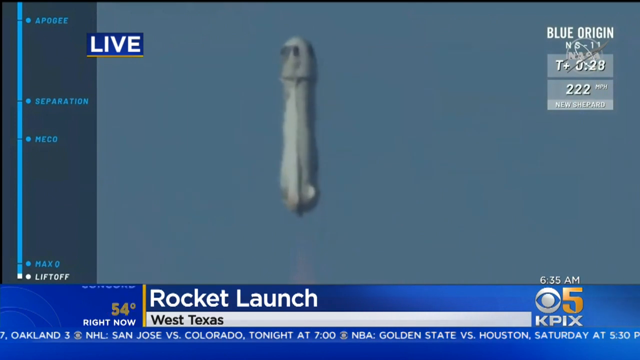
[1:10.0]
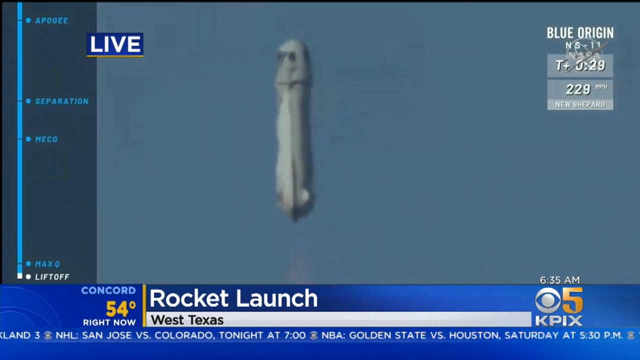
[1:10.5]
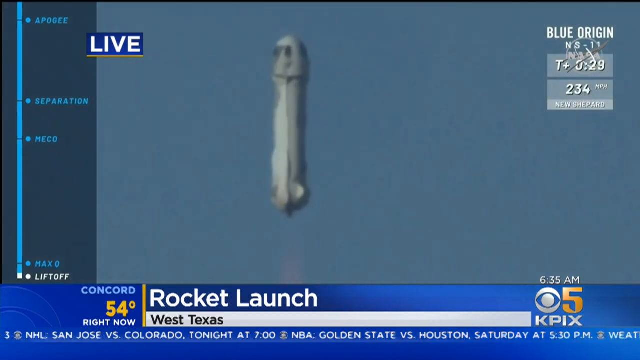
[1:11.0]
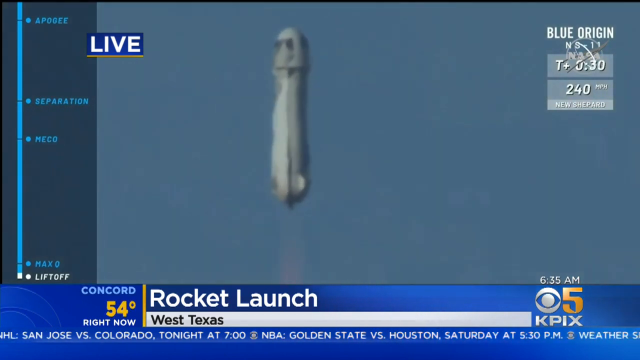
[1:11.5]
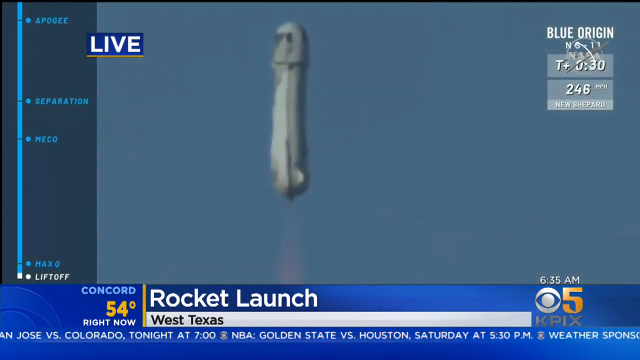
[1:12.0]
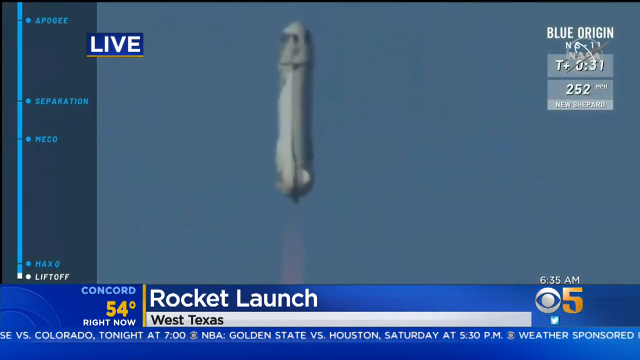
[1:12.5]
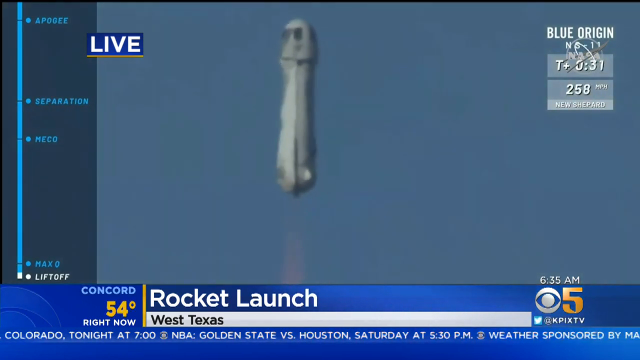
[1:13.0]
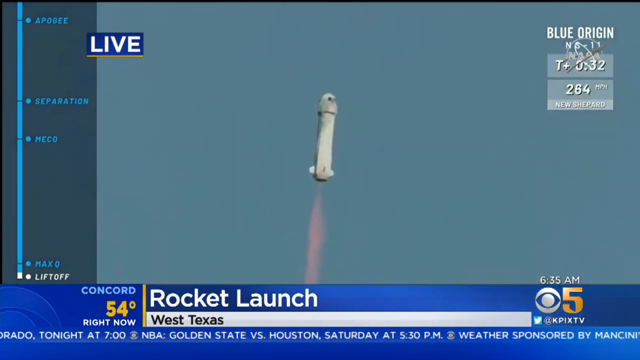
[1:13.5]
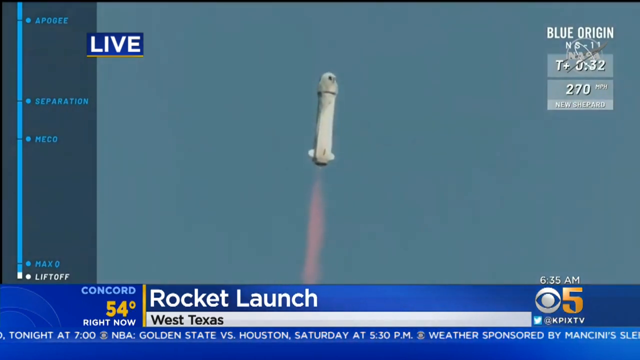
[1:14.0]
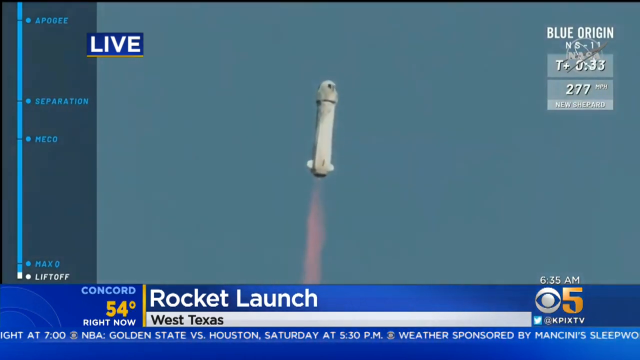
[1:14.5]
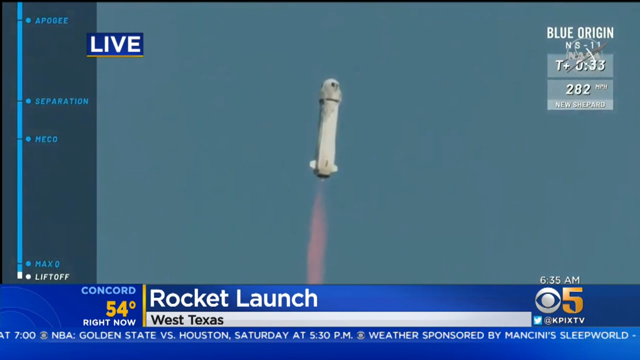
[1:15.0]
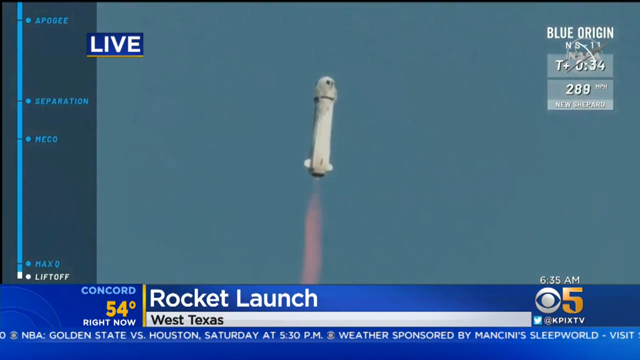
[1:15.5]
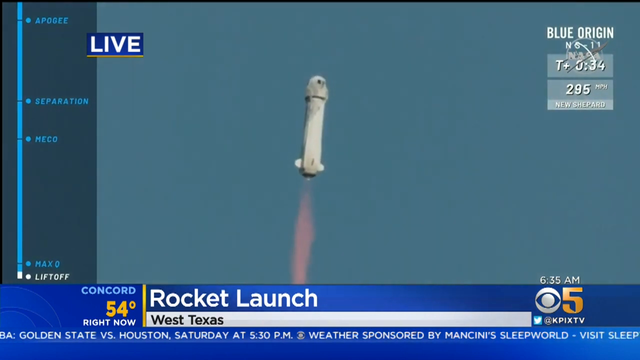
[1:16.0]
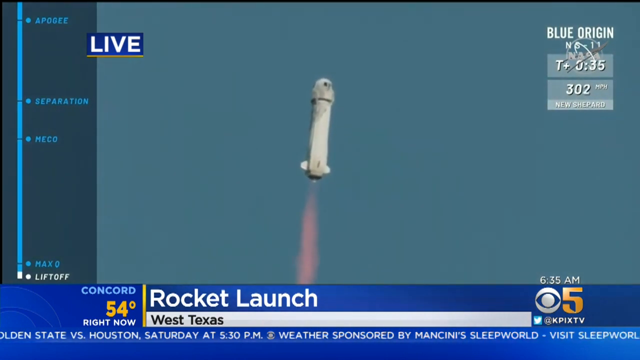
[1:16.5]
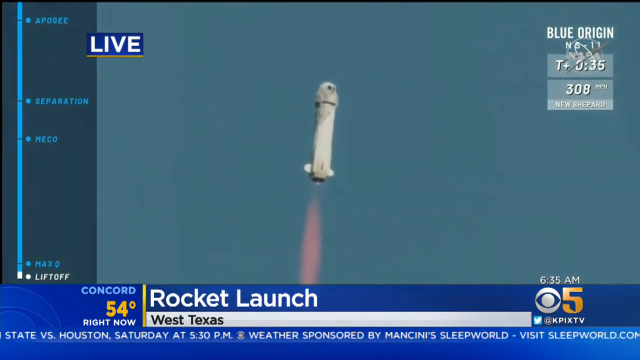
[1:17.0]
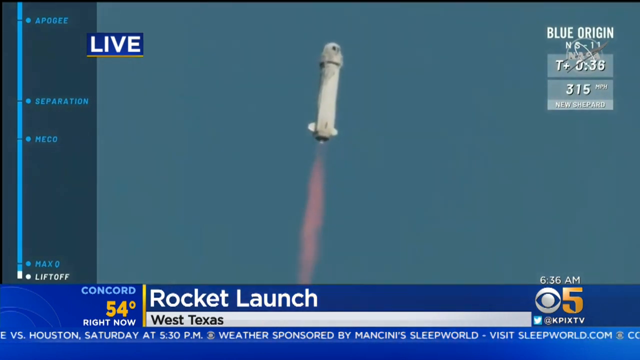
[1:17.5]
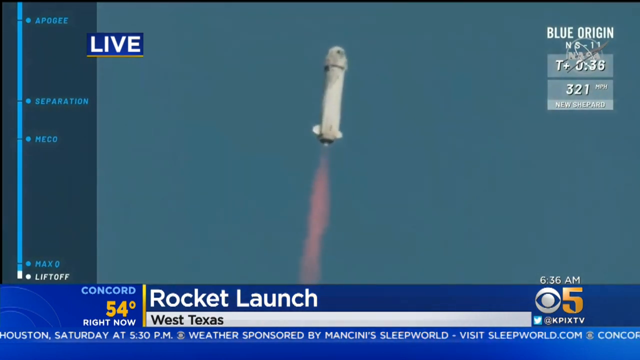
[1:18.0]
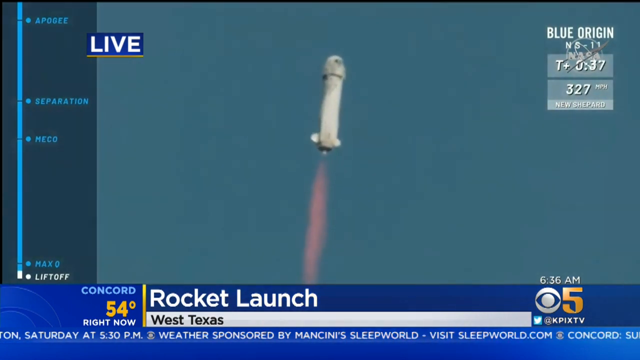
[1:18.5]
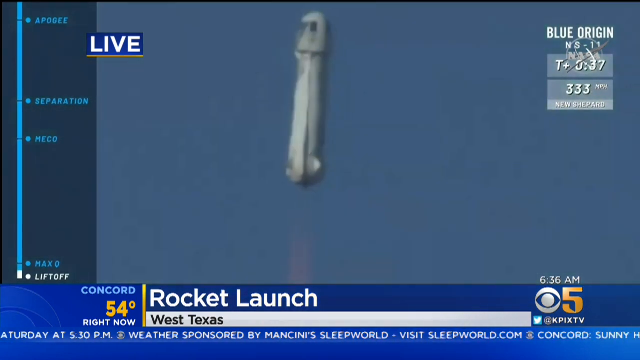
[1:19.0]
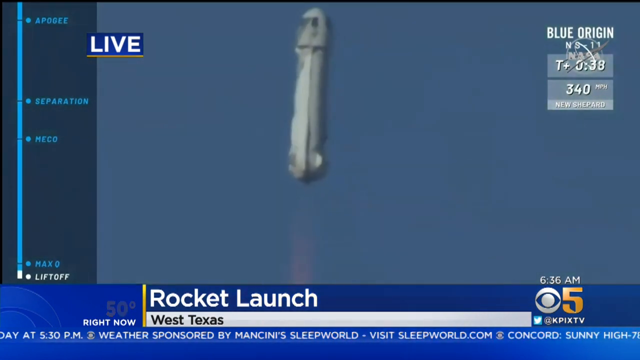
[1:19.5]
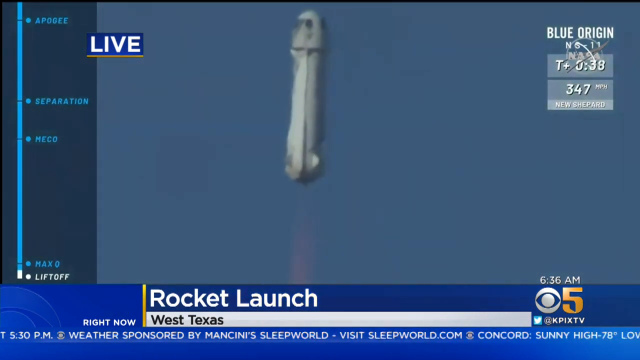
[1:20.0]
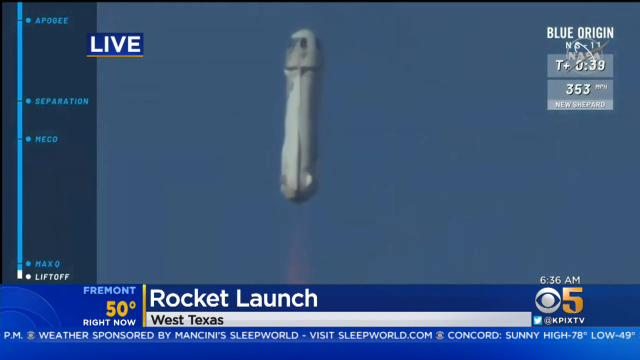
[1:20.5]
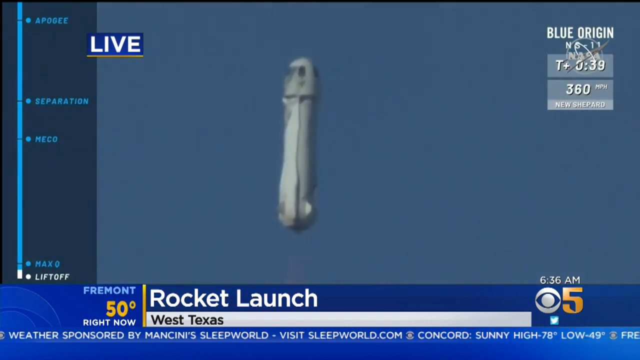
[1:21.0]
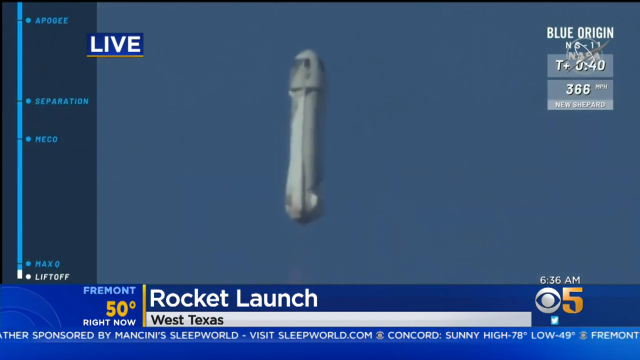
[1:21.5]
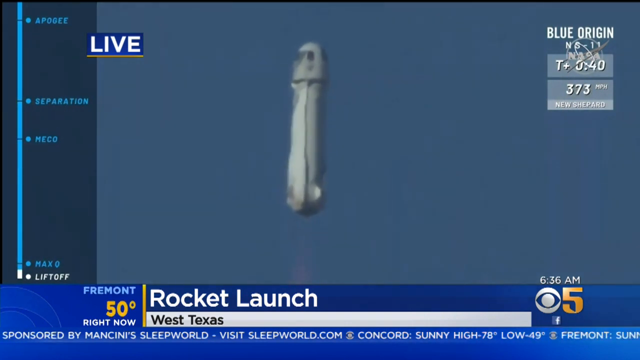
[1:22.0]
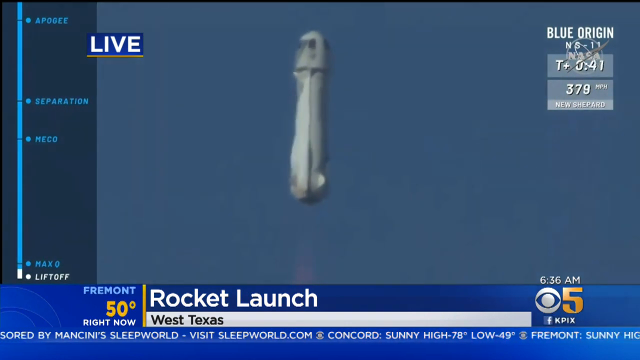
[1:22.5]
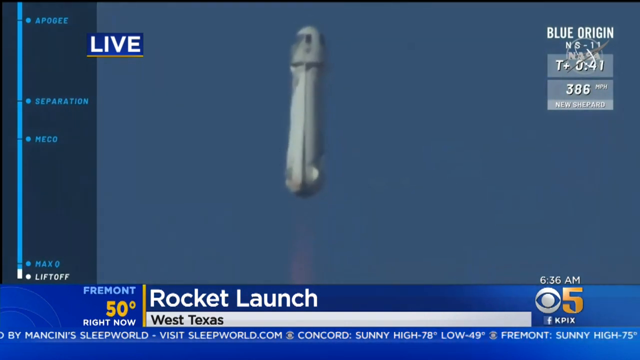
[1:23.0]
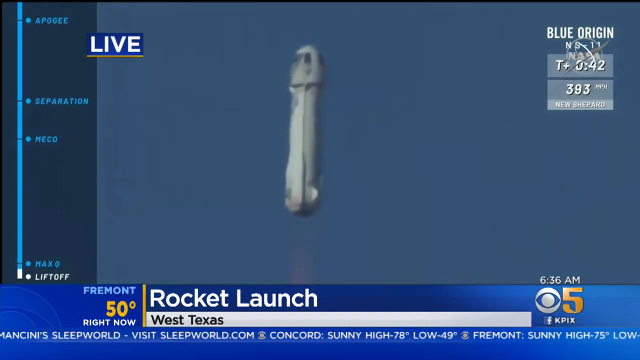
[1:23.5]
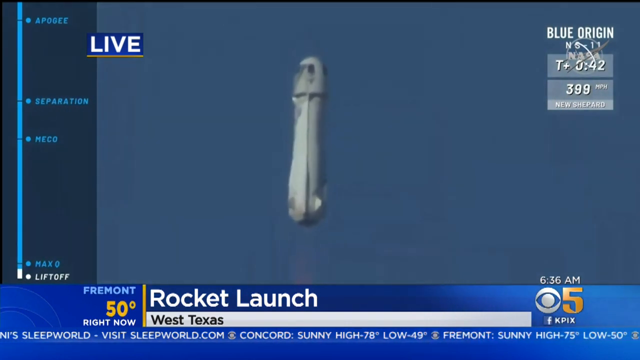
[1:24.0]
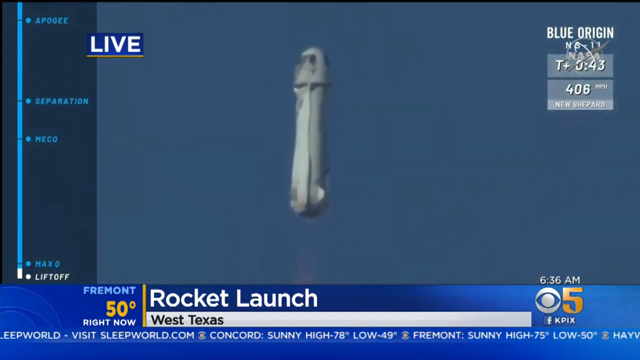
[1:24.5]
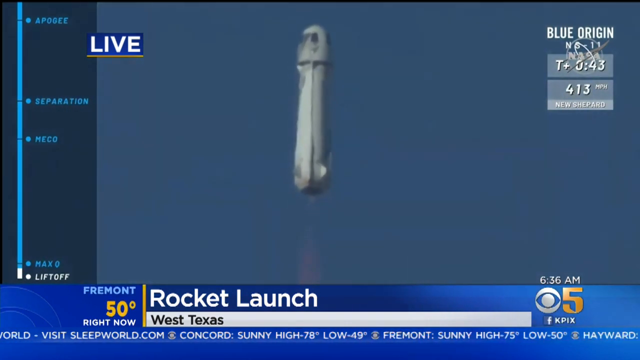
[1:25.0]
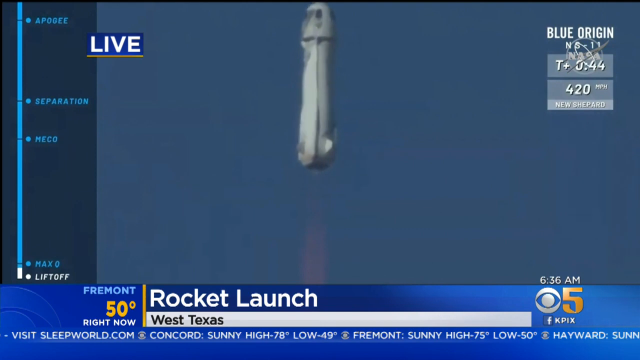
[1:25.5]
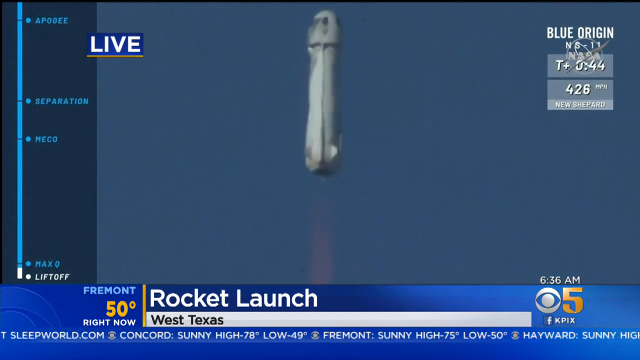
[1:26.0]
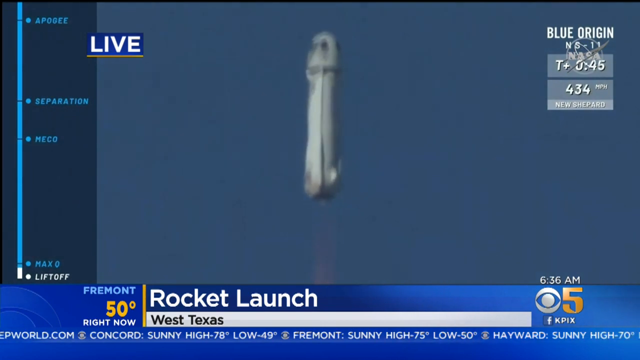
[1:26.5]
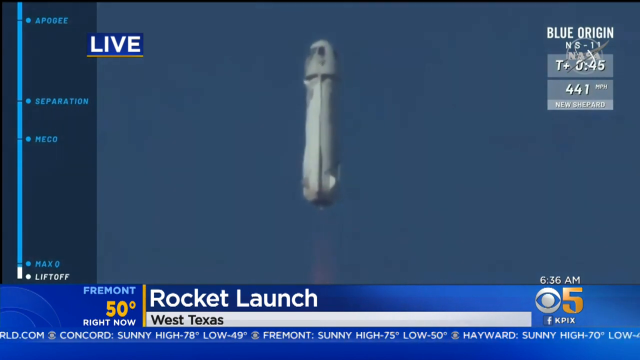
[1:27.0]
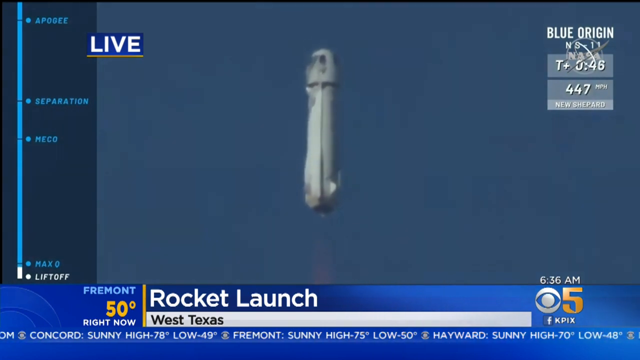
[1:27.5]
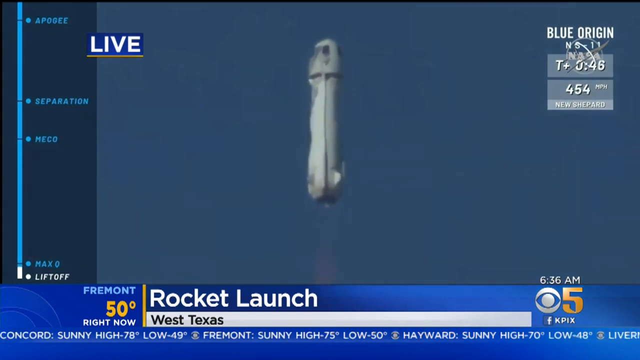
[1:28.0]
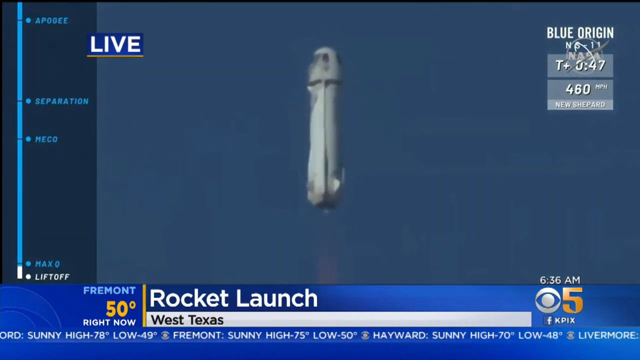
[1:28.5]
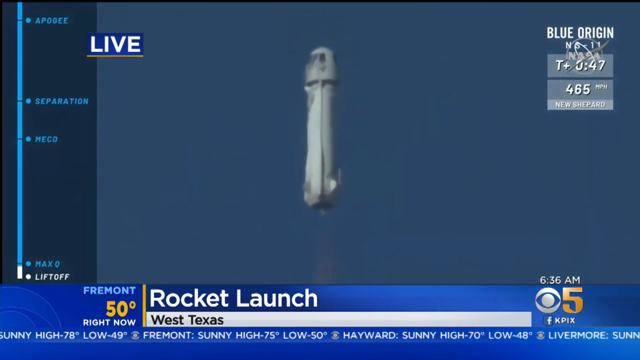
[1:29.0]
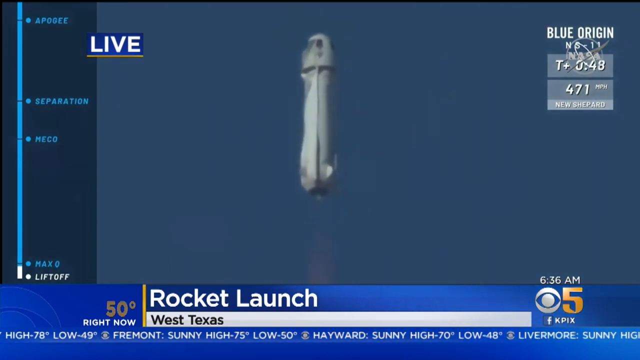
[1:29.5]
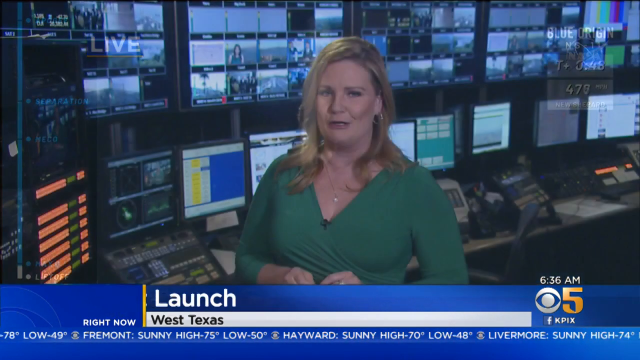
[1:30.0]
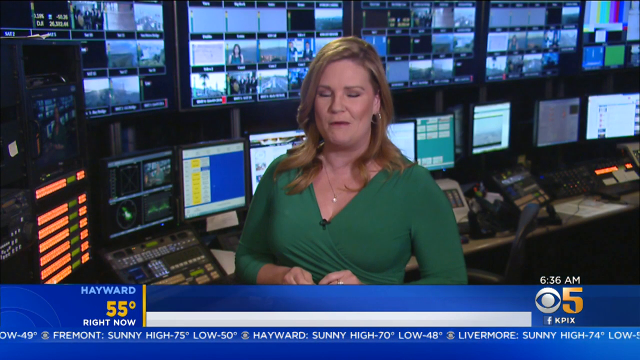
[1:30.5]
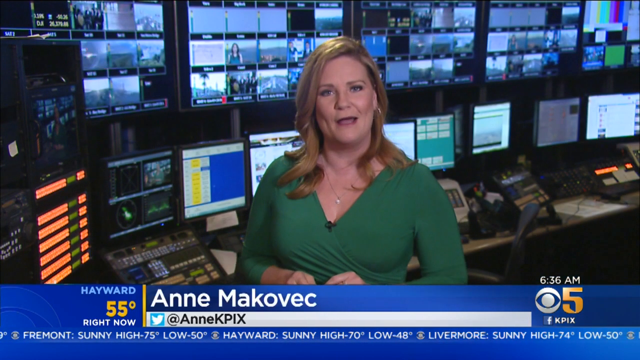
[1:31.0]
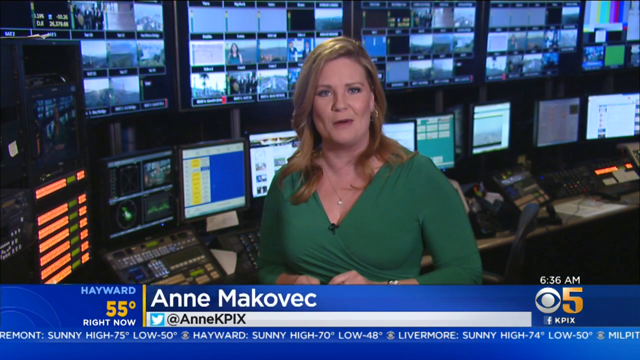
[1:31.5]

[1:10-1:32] The rocket ship goes higher and higher into the air and space. Beside it a "T plus" timer counts upward, and the displayed speed keeps increasing, reaching a maximum of 475 miles per hour. The scene then cuts to a blonde woman in a green dress and a gold necklace, looking into the camera and speaking, with a bunch of videos and computers behind her. Across the bottom of the screen is a blue banner reading "Anne McEvec." On the left it shows "Hayward" and 55 degrees, and on the right is the Channel 5 logo, an eyeball logo, with the time reading 6:36 in the morning.